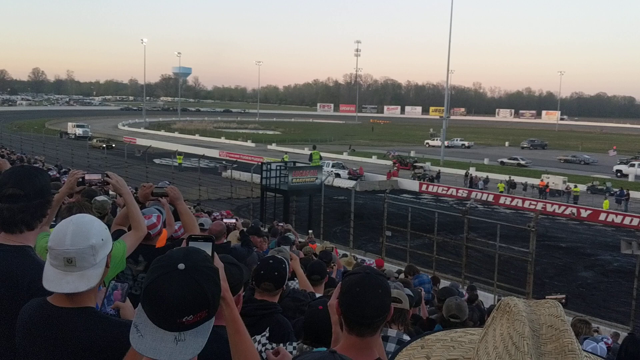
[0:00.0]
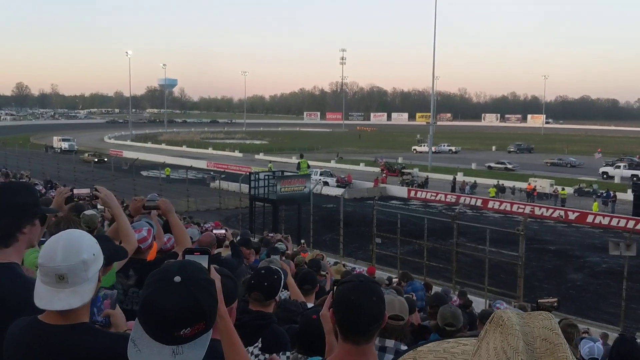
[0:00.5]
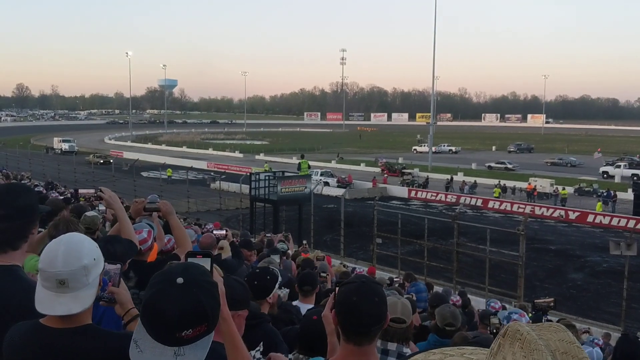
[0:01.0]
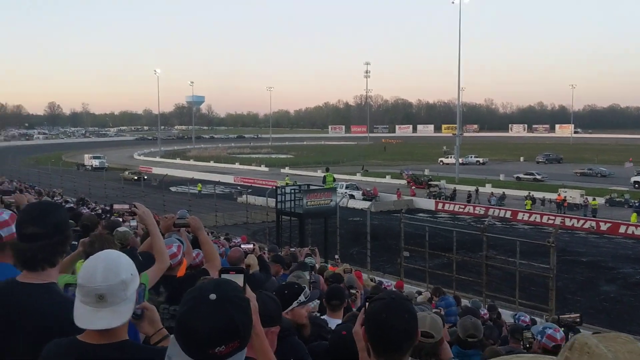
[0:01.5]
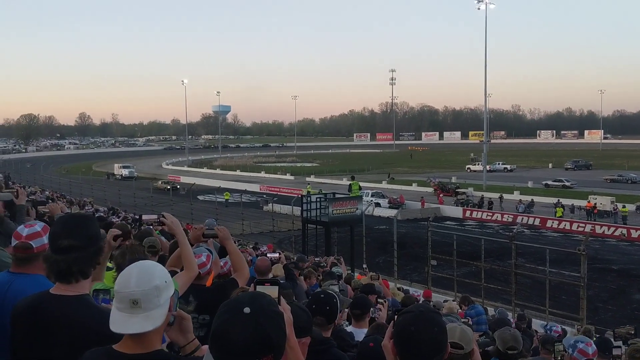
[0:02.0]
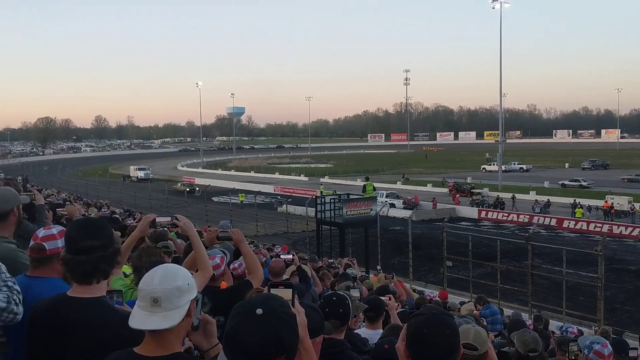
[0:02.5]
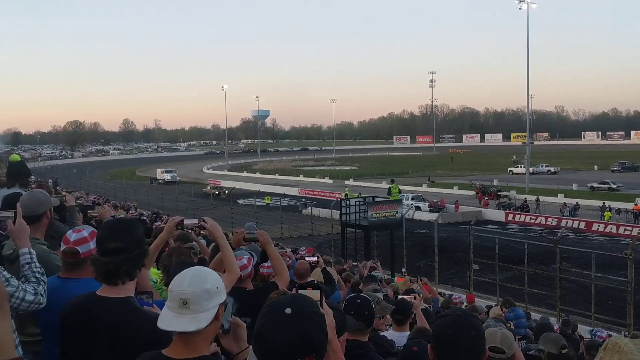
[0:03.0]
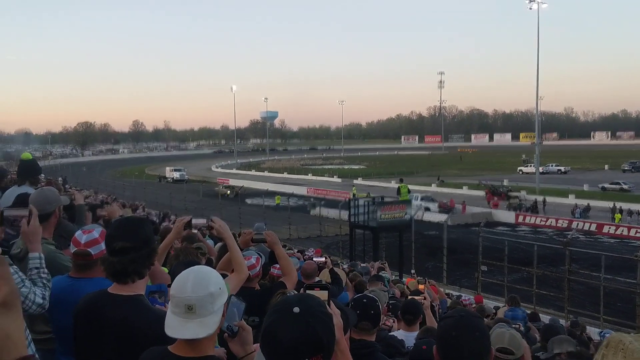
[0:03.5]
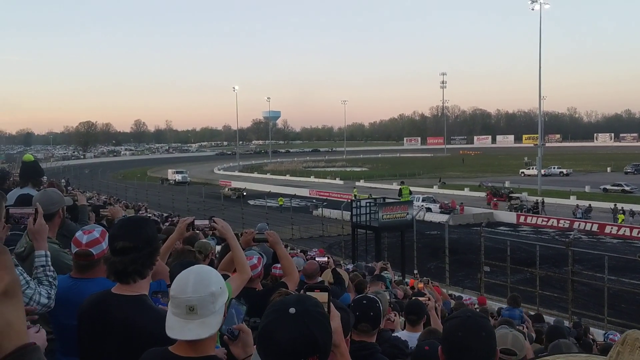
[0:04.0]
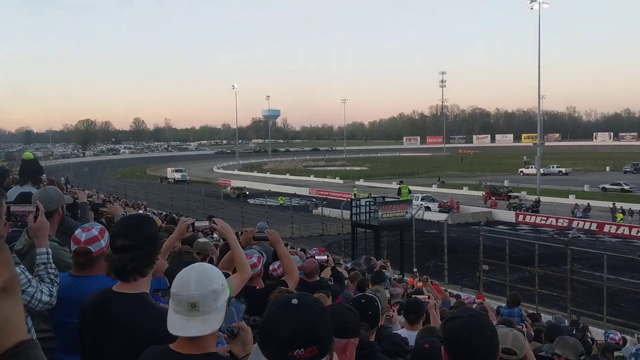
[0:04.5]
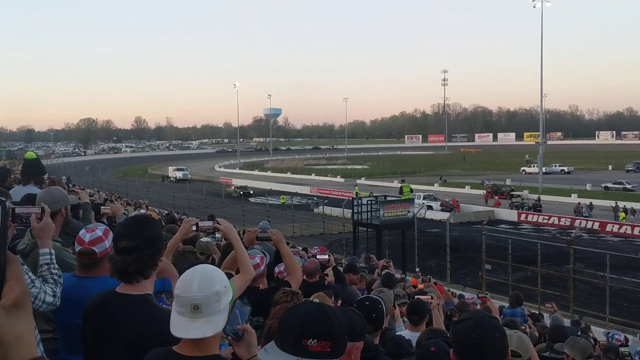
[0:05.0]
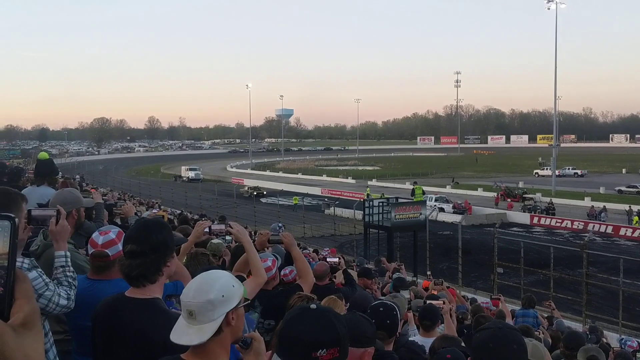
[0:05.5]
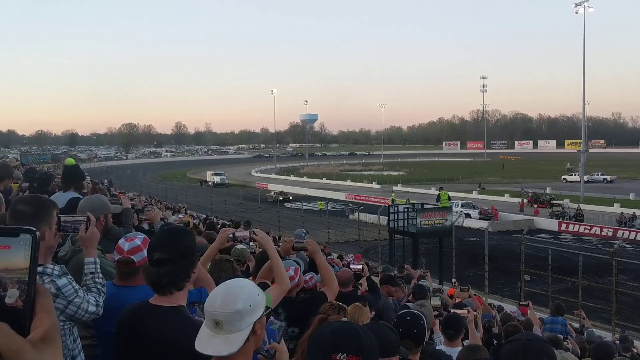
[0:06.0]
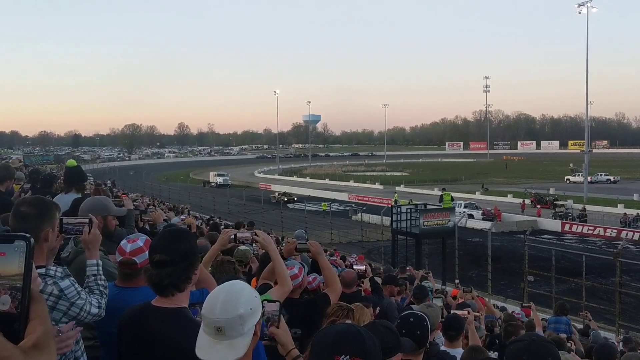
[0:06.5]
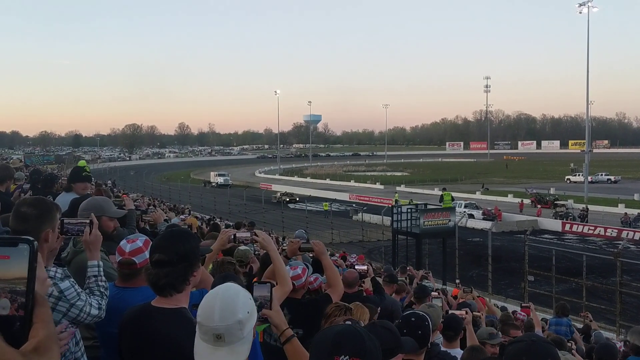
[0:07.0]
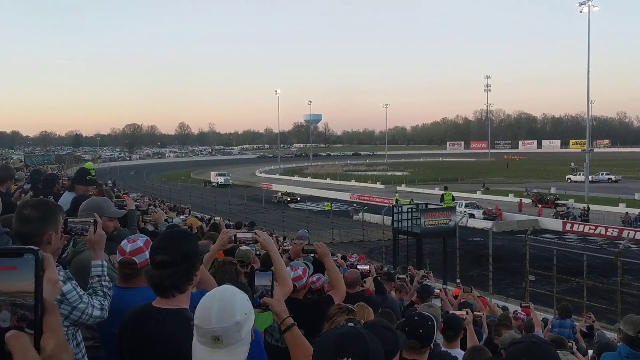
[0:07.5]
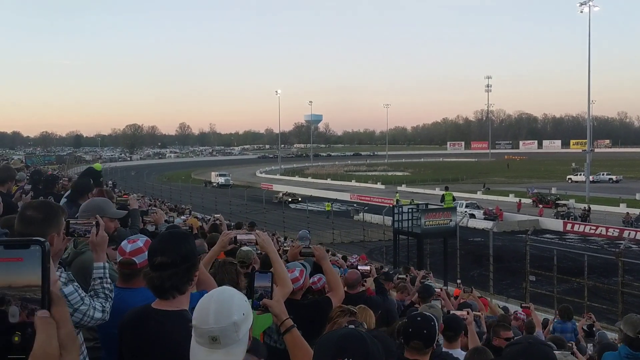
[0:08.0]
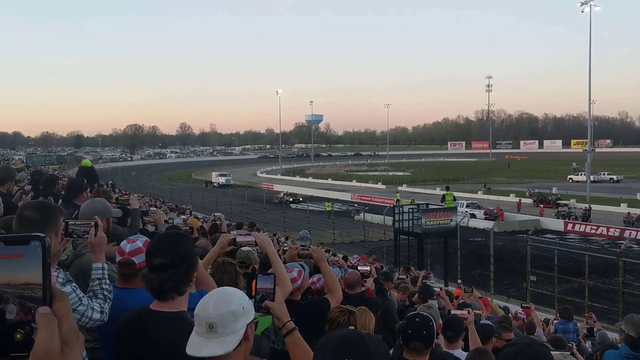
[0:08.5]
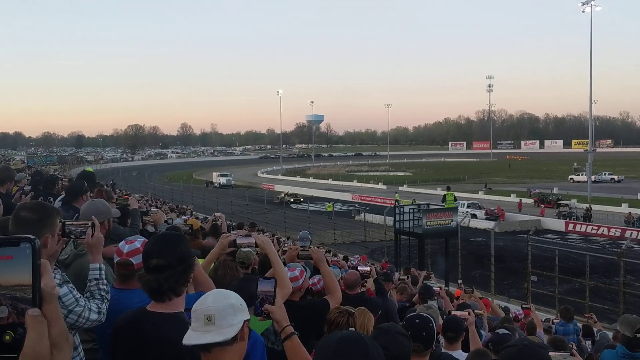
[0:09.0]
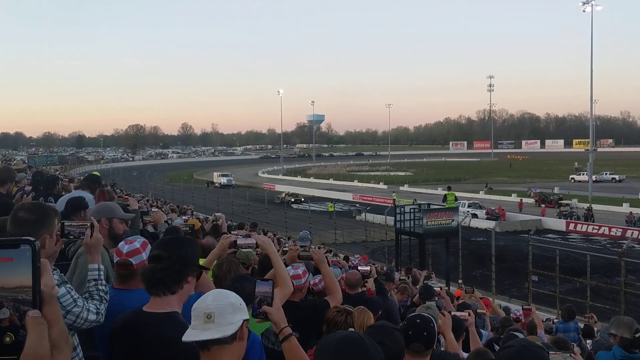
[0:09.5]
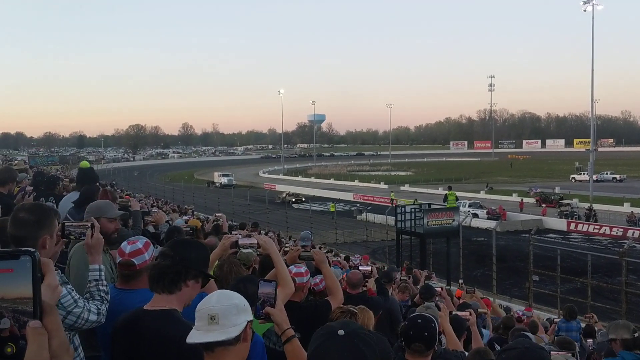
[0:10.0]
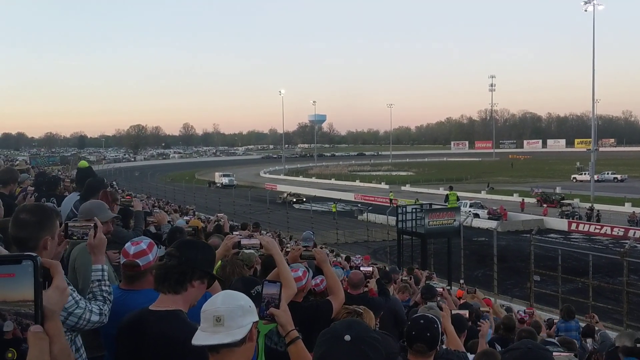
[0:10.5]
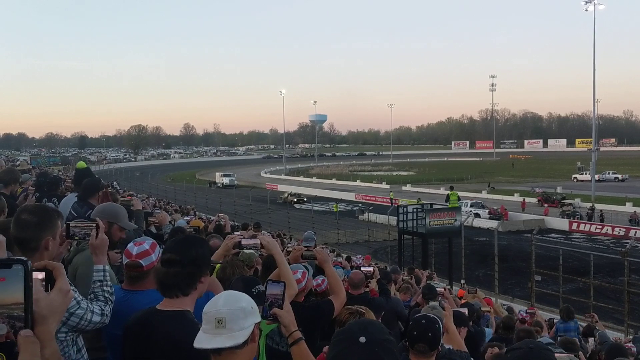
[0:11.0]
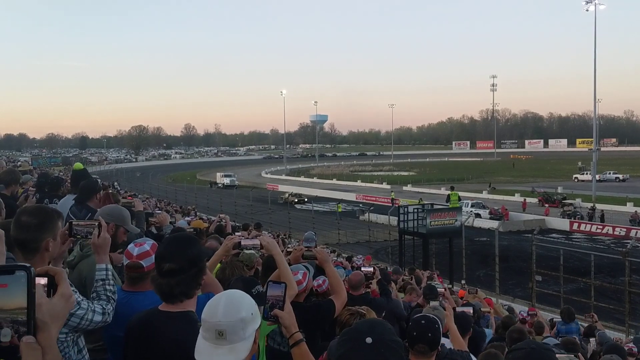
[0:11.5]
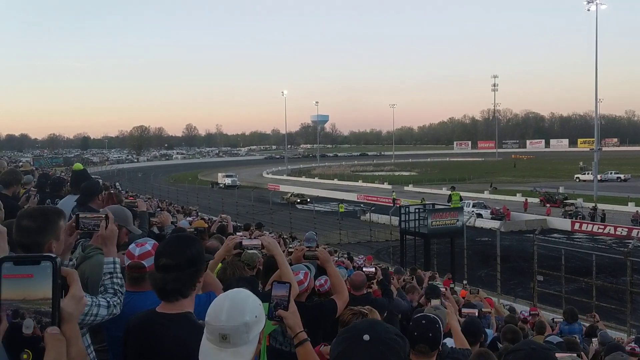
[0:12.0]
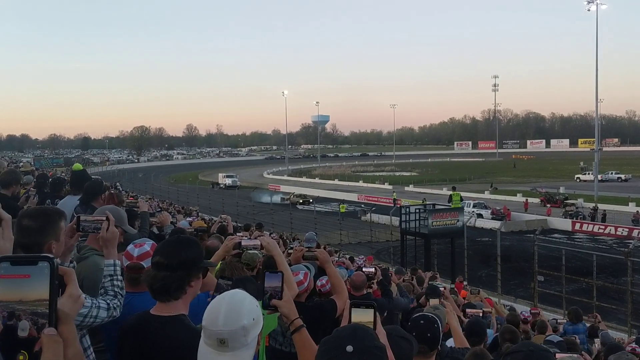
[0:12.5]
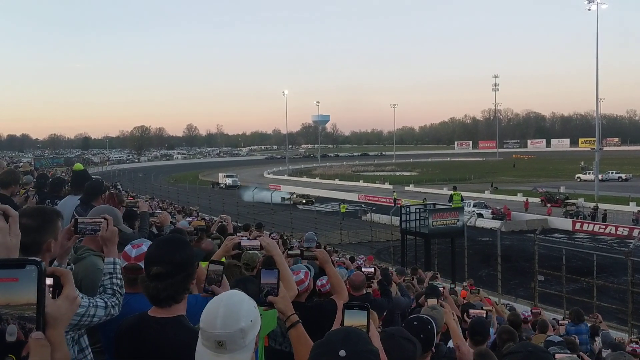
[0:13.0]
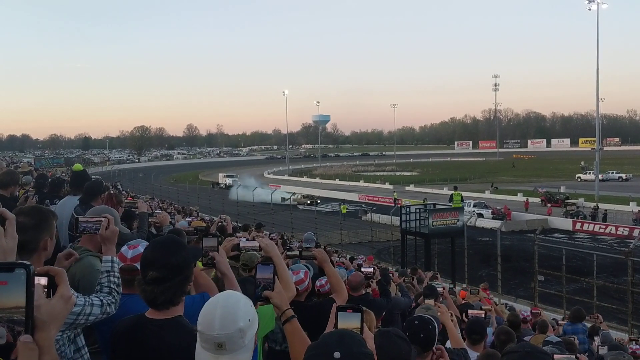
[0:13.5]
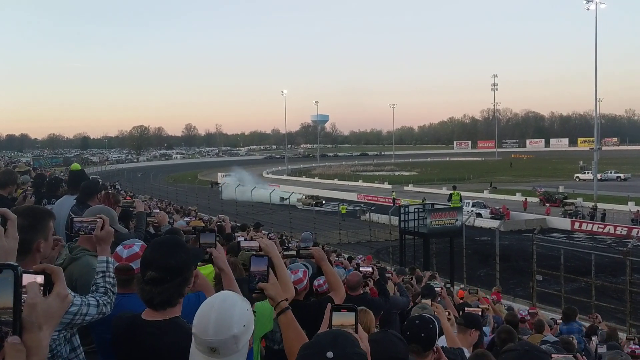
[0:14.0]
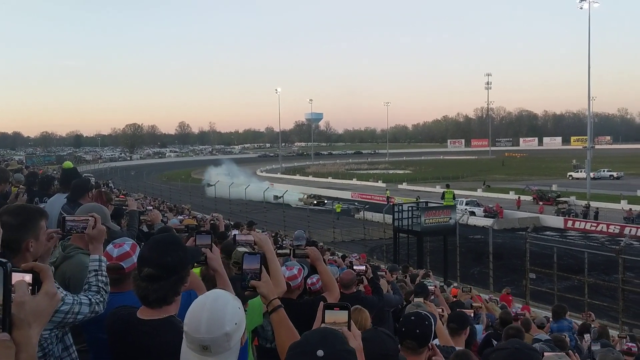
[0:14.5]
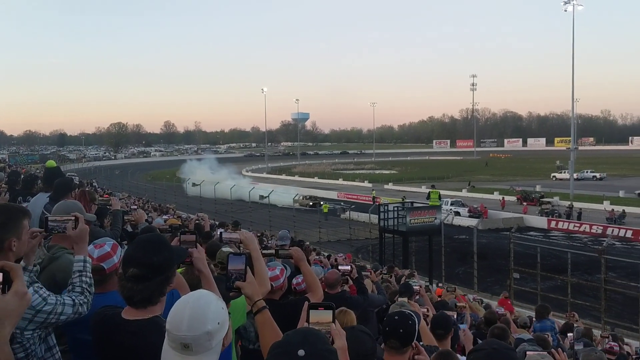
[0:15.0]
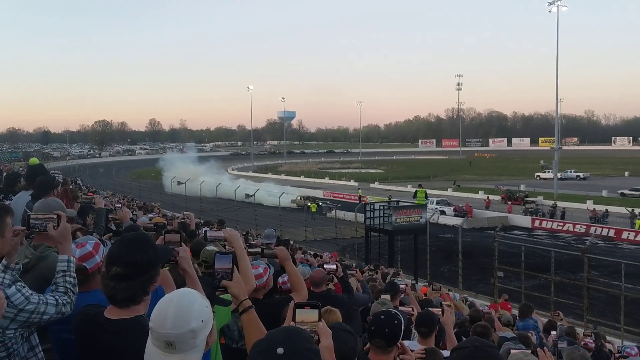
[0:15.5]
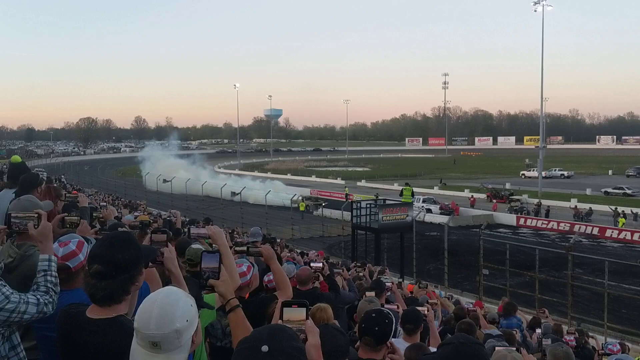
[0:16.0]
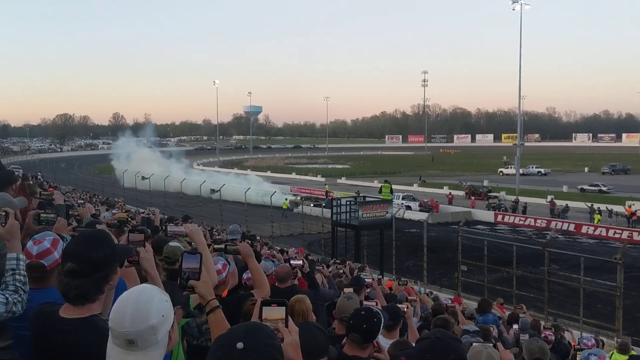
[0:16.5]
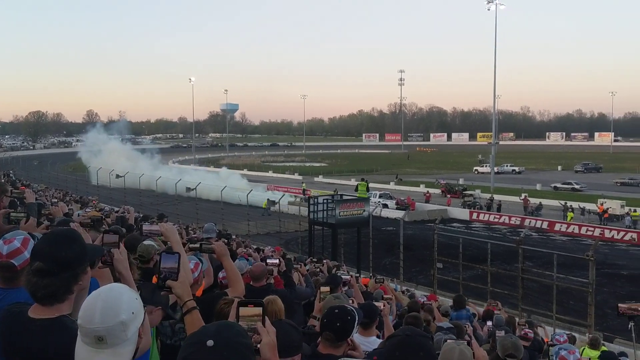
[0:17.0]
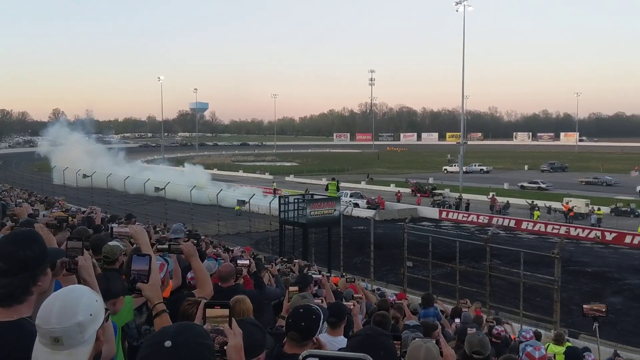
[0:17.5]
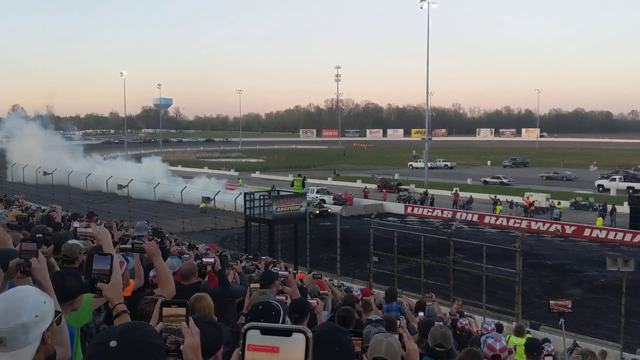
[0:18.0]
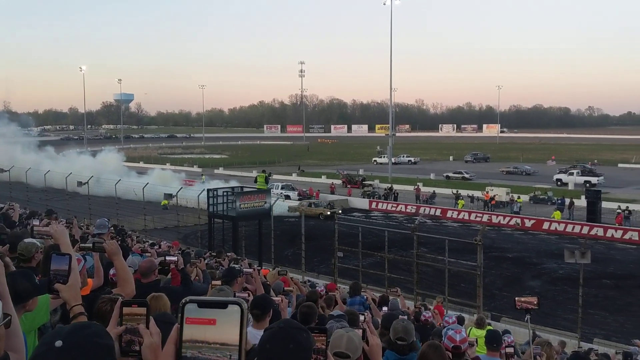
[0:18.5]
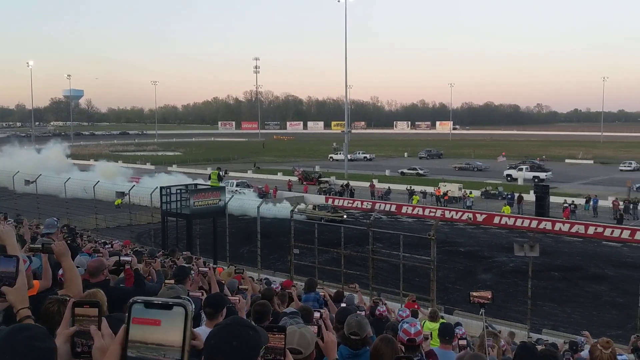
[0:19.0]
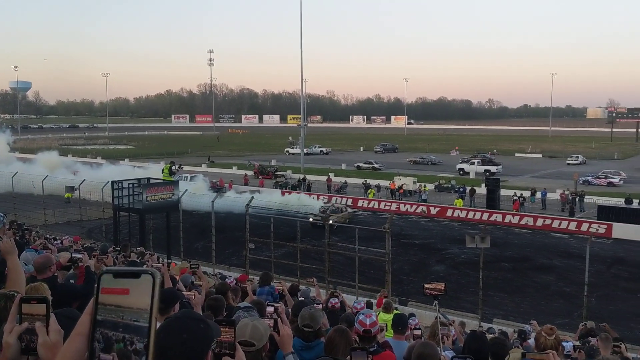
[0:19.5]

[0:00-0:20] A car race circuit appears on a sunny day with no clouds in the sky, and it appears to be nearing sunset in the evening. A significant number of fans are in the stadium around the circuit, and some of them point their mobile phones towards the cars on the circuit, taking pictures and videos. A car on the circuit has its front light switched on; it starts its engine, and a significant amount of smoke comes out of its exhaust pipe, covering a number of metres. The car then moves forwards, accelerates along the circuit and spins clockwise one hundred and eighty degrees. The car is yellow and old.